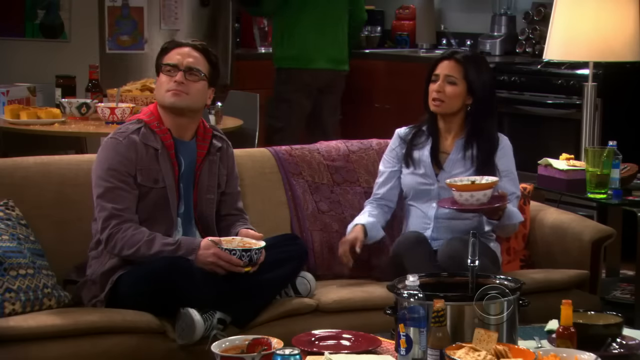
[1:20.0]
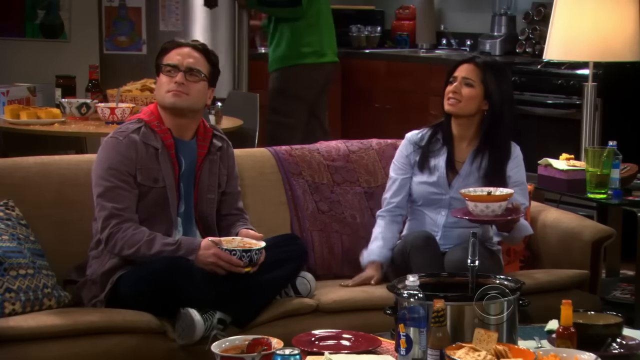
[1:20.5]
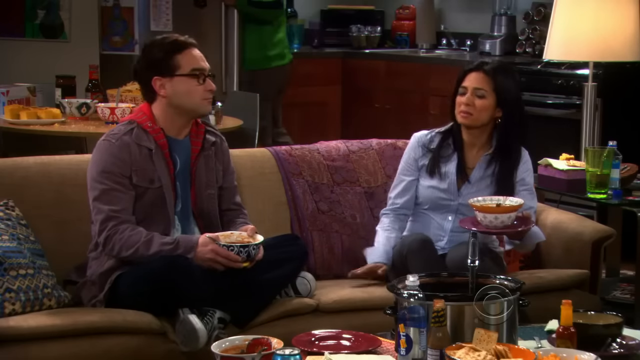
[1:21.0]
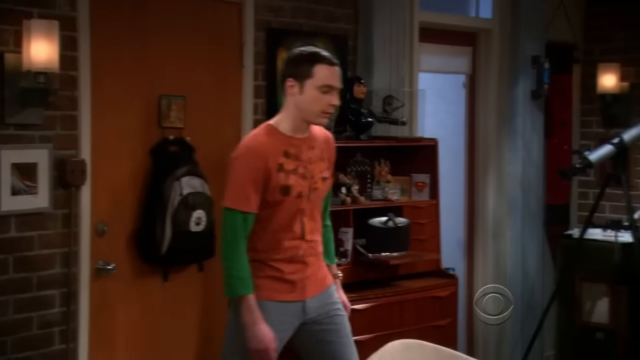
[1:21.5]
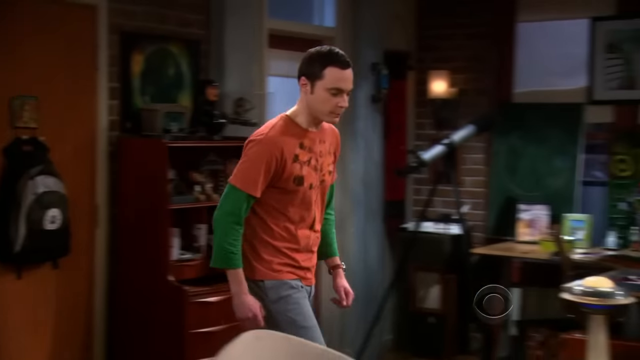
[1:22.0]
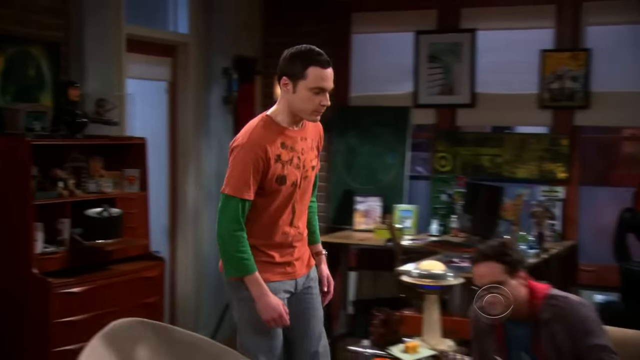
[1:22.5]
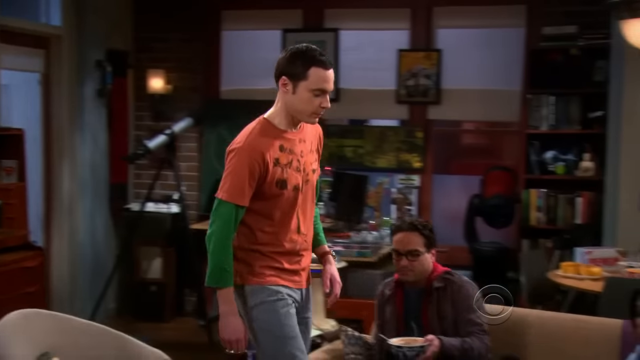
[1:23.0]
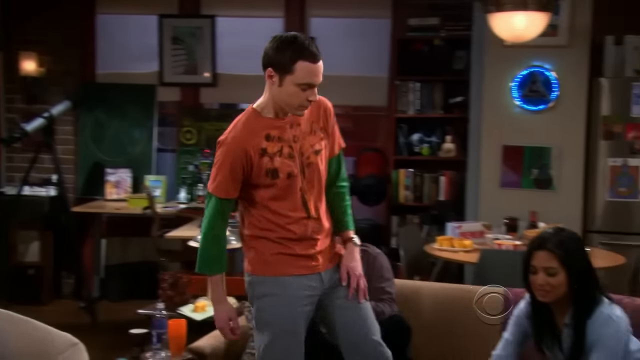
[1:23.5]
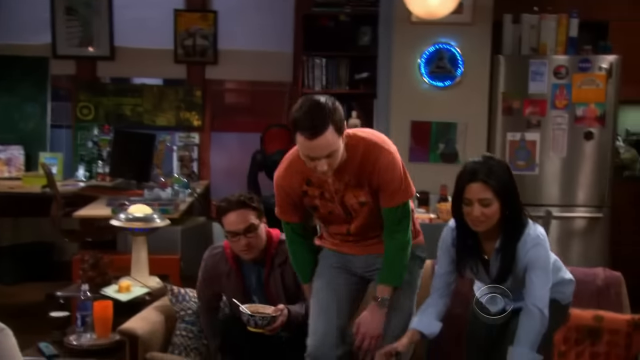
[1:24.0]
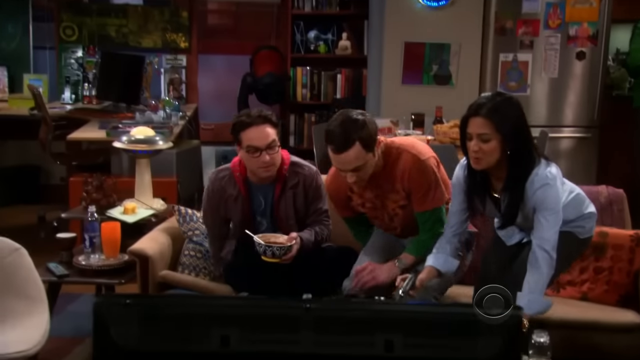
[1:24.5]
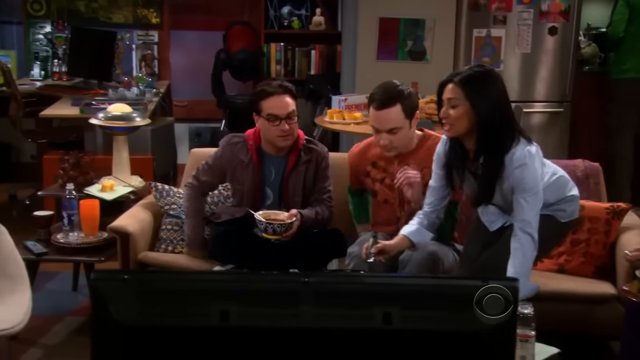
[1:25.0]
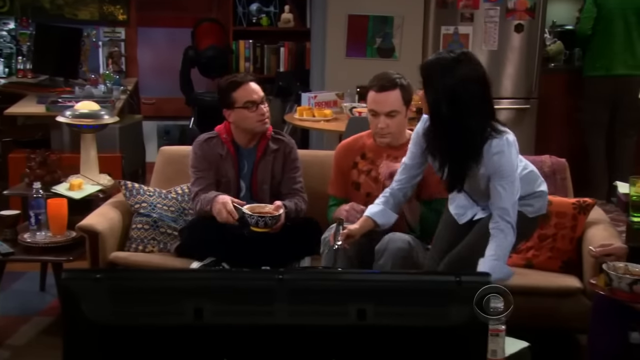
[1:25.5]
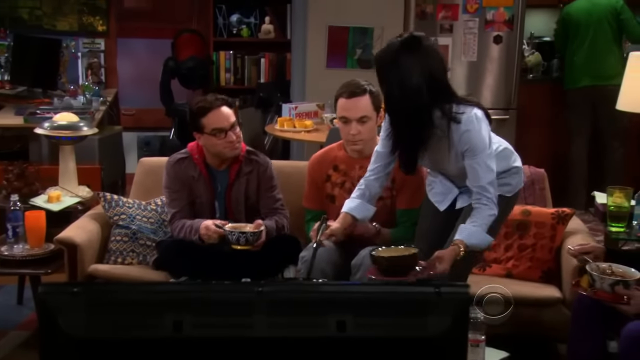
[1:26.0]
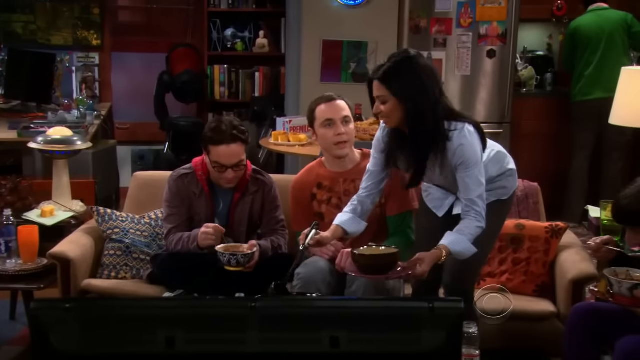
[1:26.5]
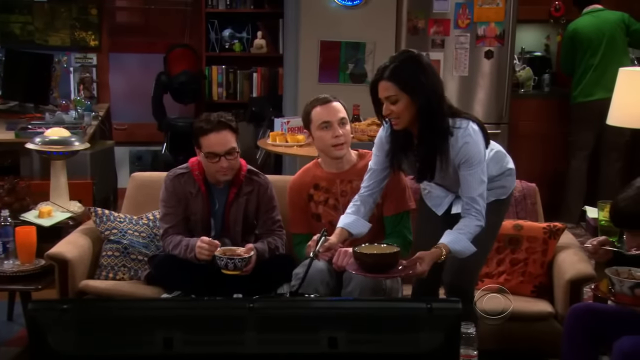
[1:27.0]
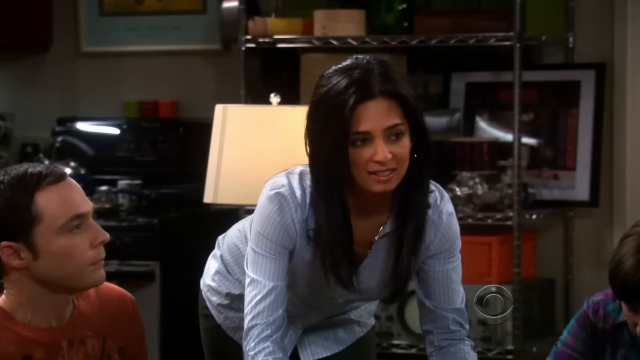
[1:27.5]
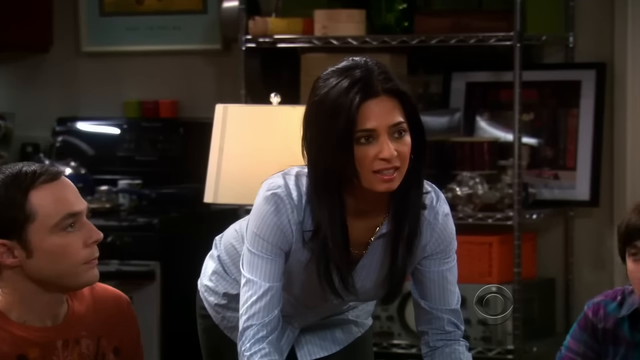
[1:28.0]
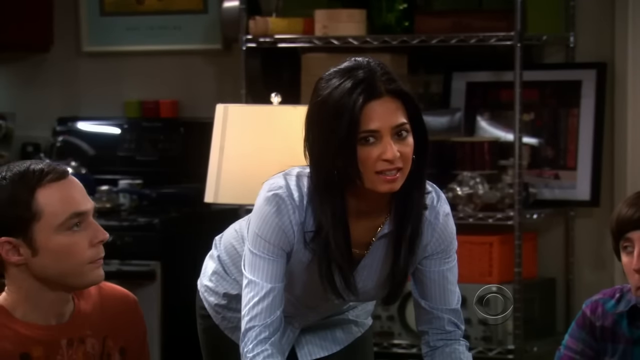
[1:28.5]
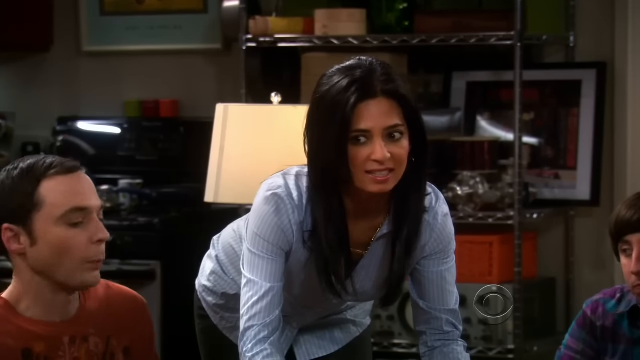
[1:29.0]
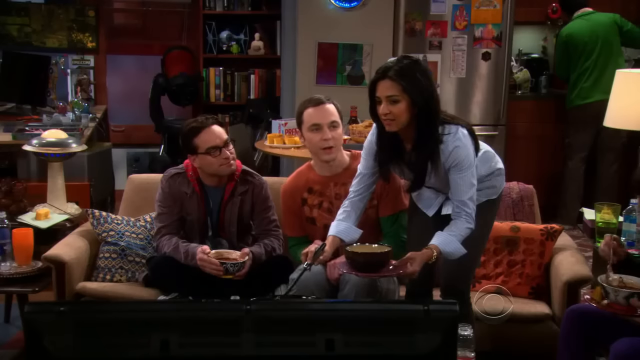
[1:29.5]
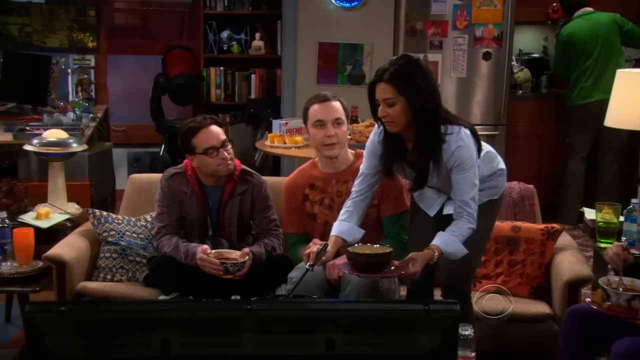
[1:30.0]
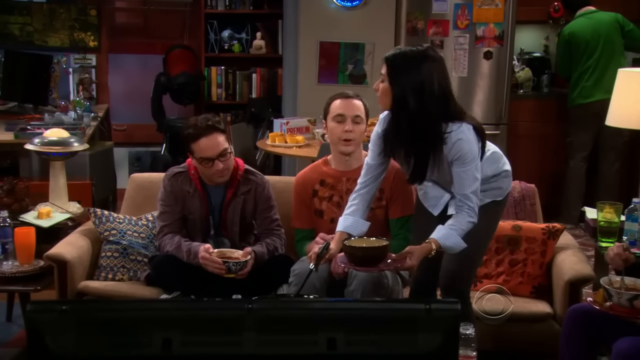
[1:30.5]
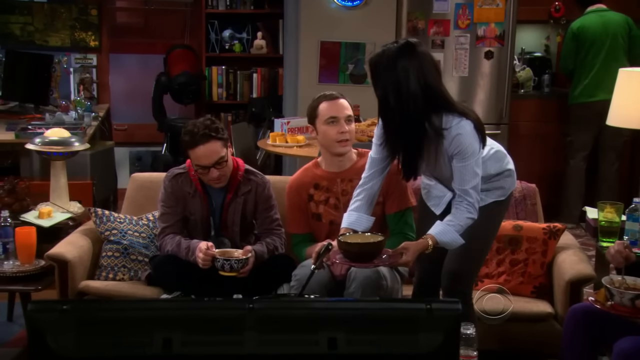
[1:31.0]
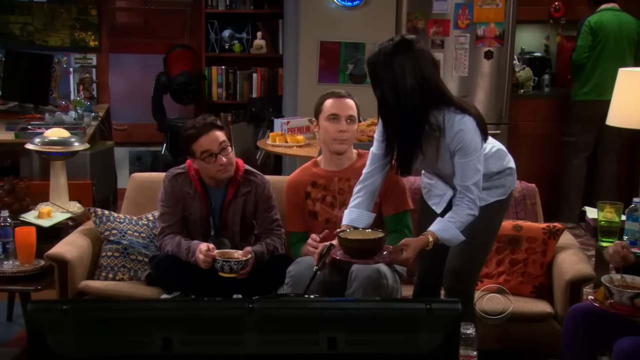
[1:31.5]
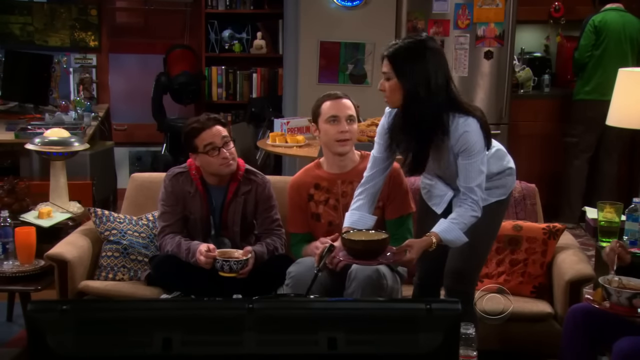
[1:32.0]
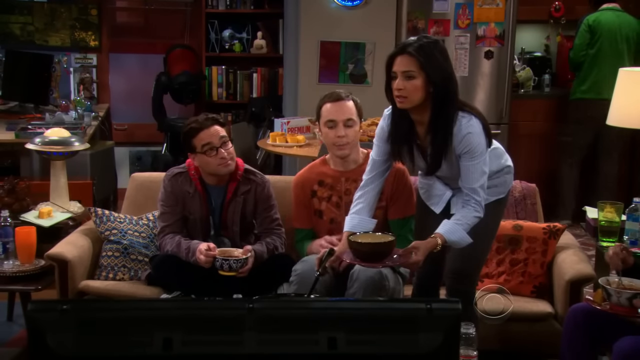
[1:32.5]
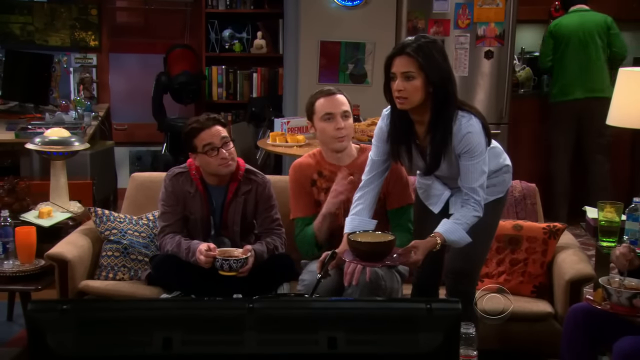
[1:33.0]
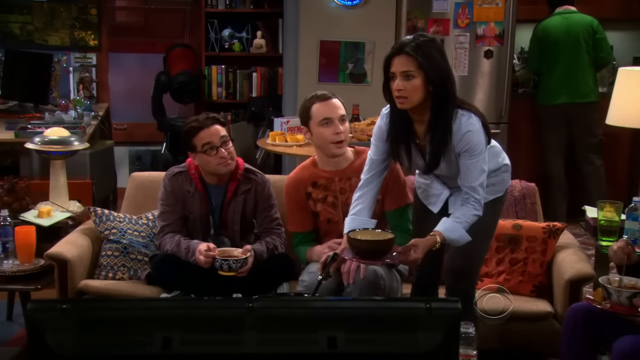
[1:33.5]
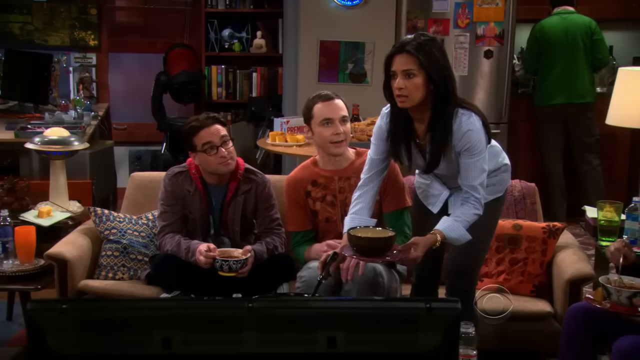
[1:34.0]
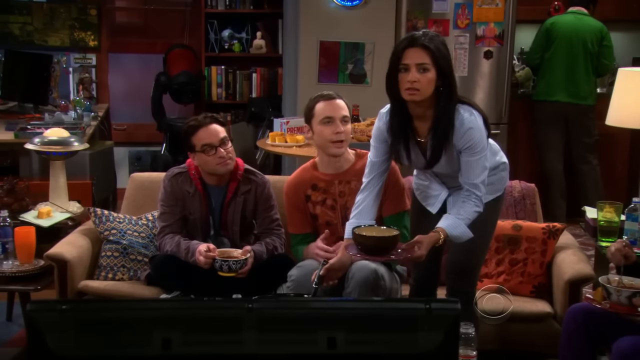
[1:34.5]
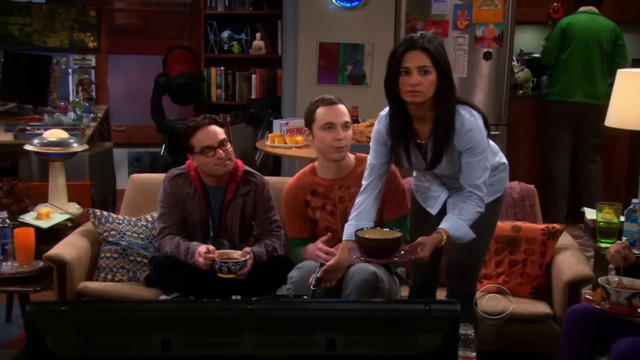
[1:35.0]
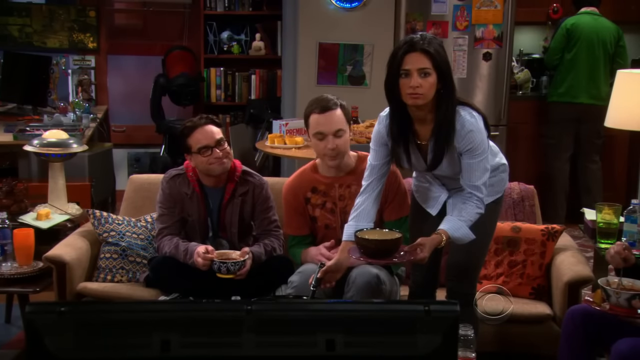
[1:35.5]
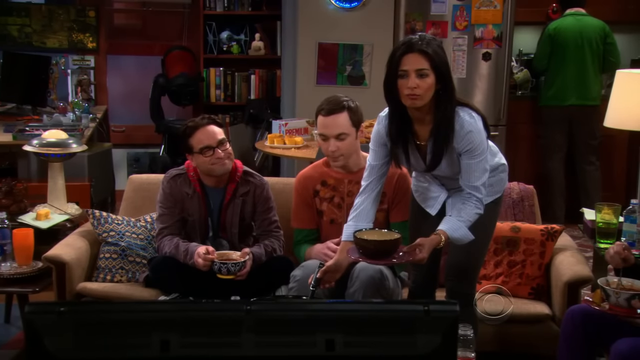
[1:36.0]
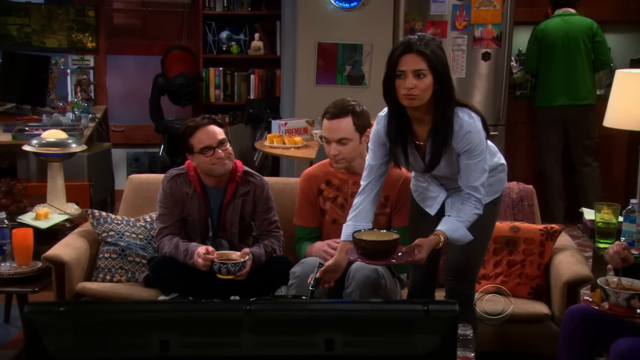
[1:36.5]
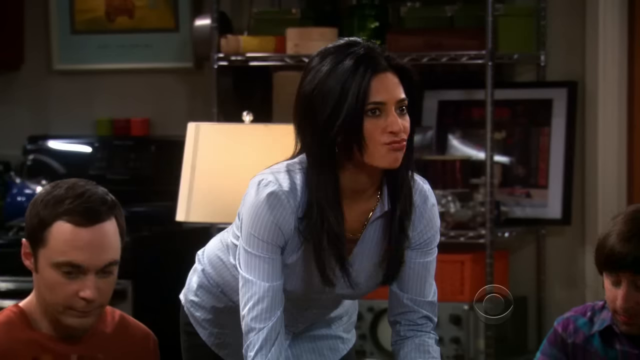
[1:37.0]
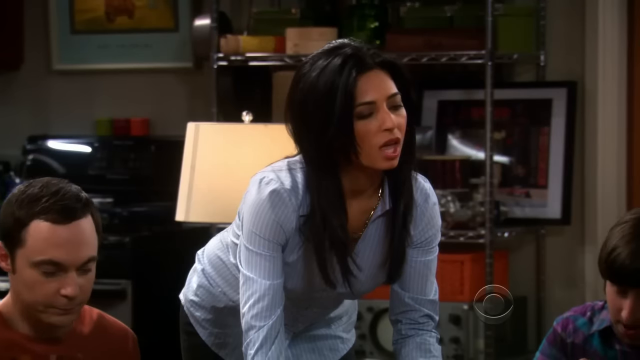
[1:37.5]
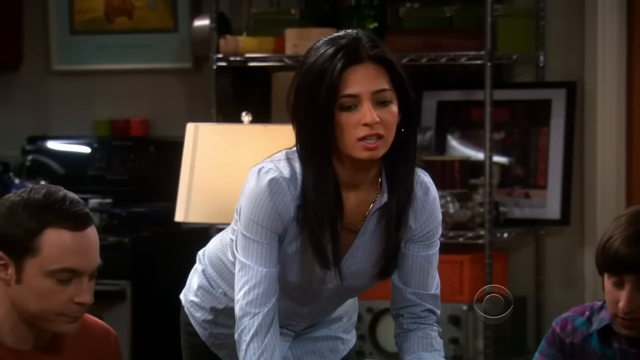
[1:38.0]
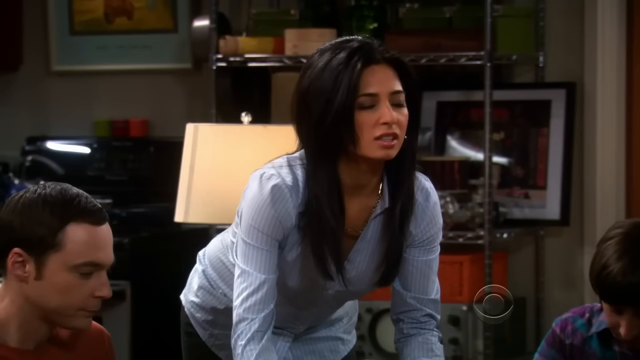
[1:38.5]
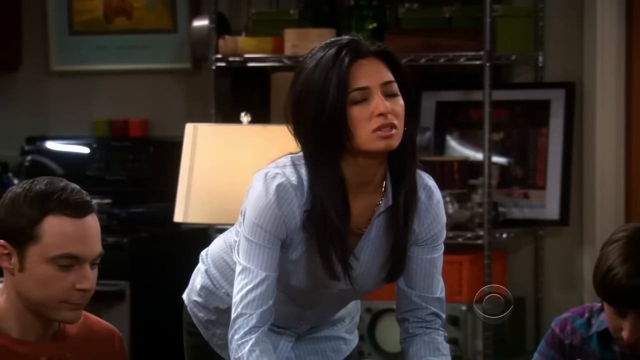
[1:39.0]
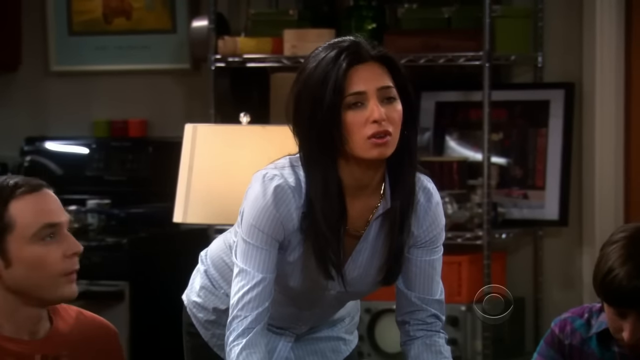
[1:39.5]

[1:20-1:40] Raj's girlfriend invites Sheldon to sit down; Leonard moves over to give him space, and Sheldon sits in the middle of them on the couch, where a blanket lies with them. Sheldon talks to Raj's girlfriend, who looks like she is dreading it and appears annoyed with him; he is apparently expecting her to give him some soup. Meanwhile, Raj goes into the refrigerator looking for something and works at the kitchen counter. Leonard sits there intently and continues to eat his soup. A magnifying glass is visible out the window.